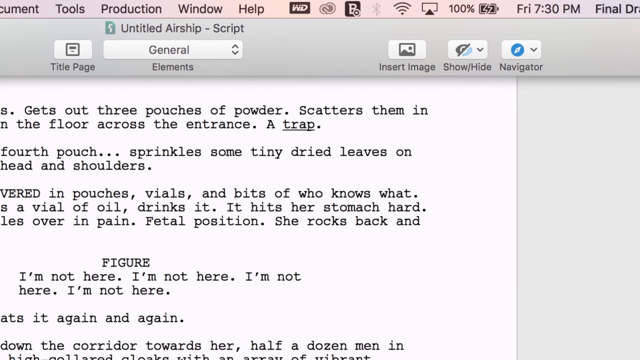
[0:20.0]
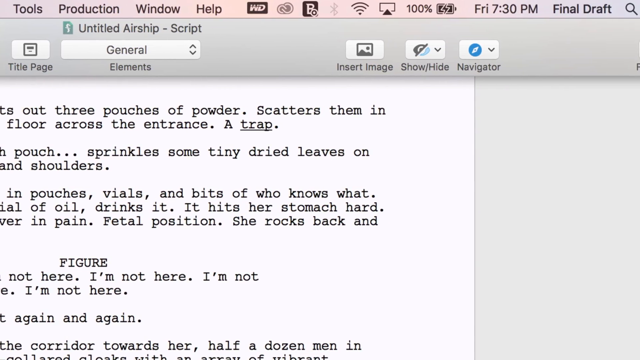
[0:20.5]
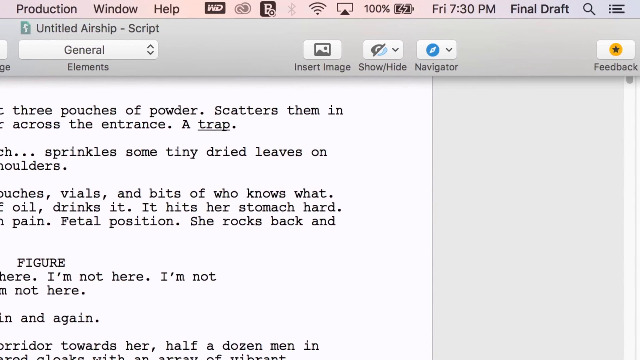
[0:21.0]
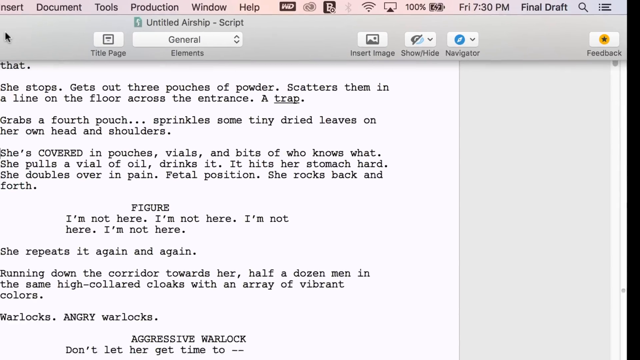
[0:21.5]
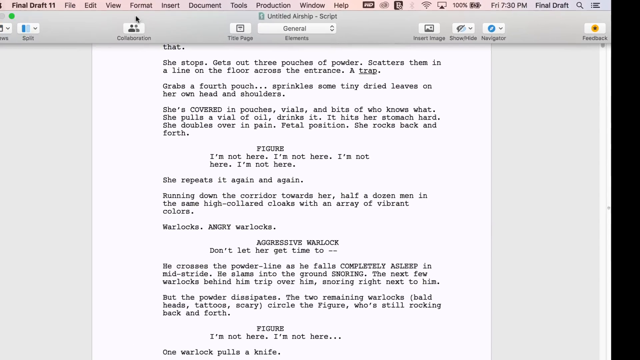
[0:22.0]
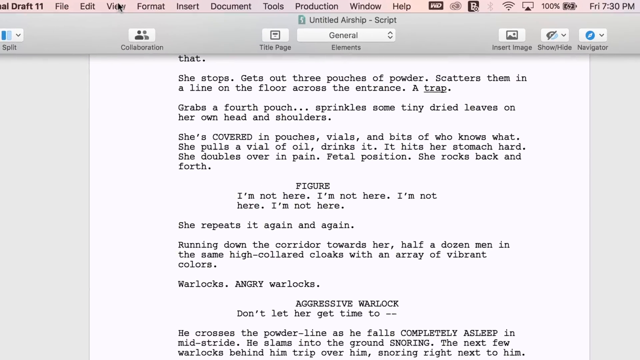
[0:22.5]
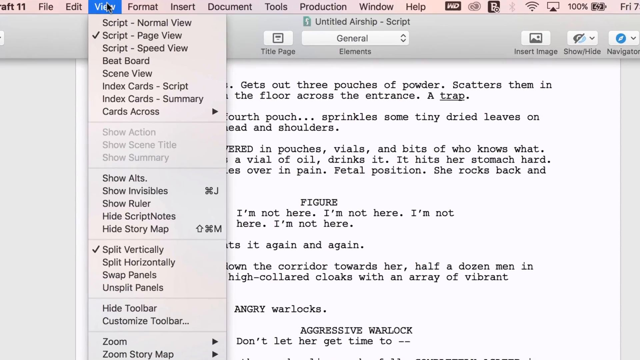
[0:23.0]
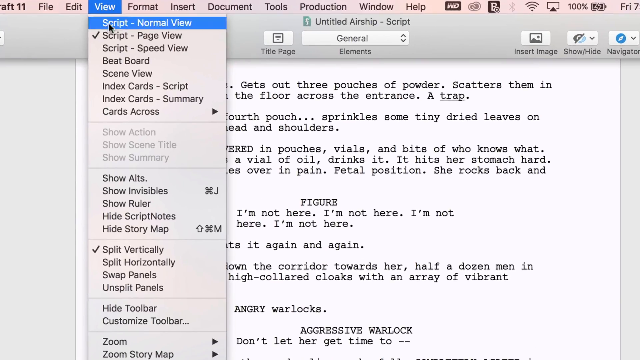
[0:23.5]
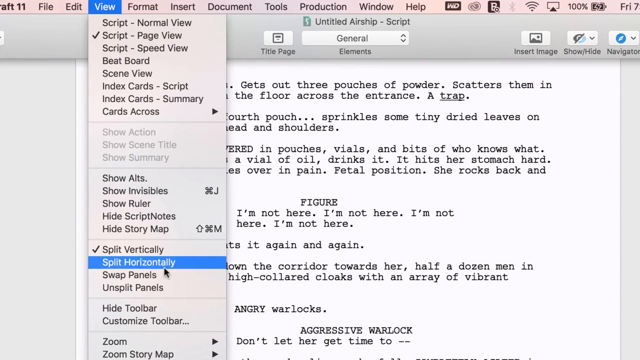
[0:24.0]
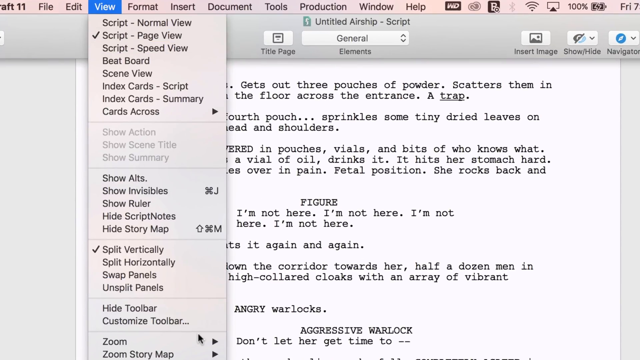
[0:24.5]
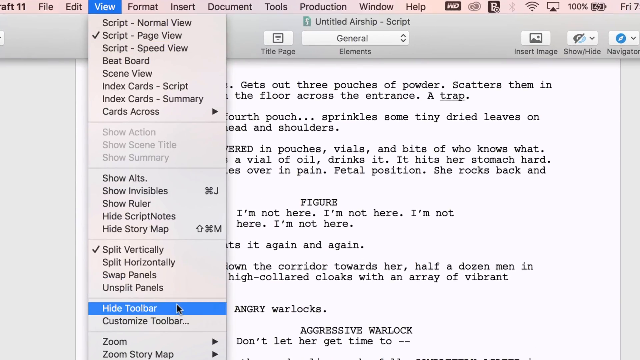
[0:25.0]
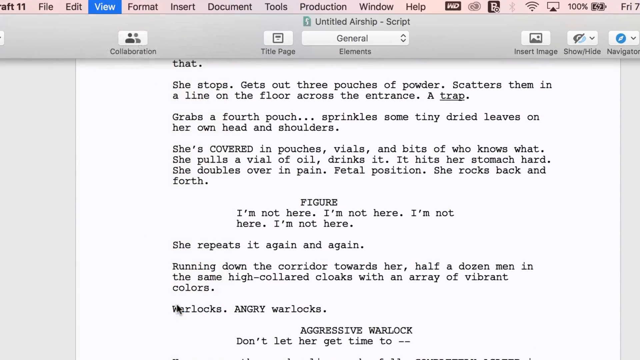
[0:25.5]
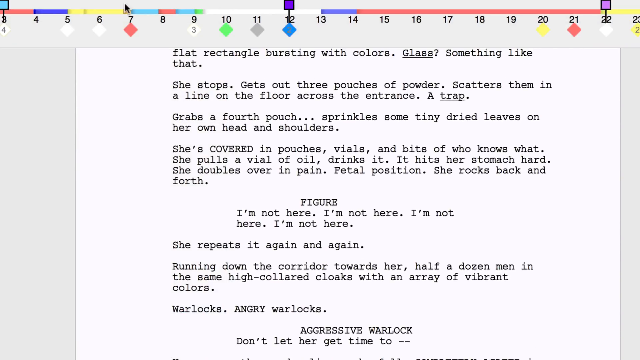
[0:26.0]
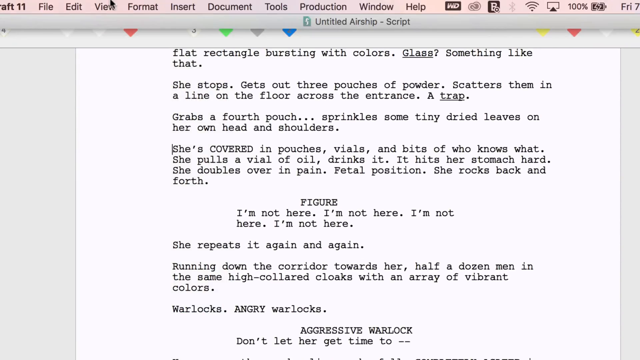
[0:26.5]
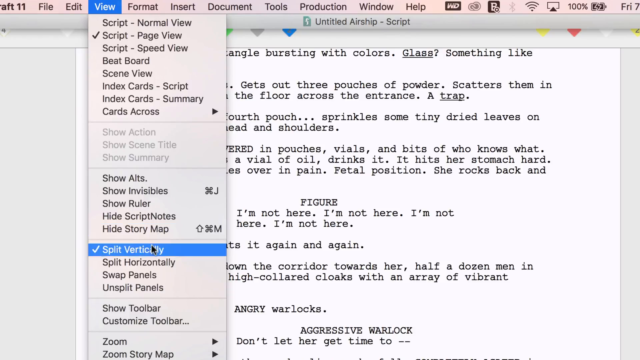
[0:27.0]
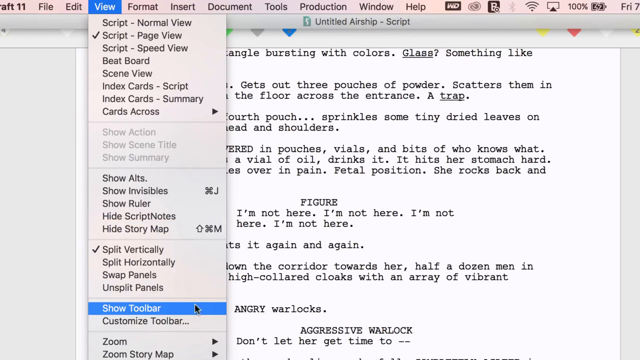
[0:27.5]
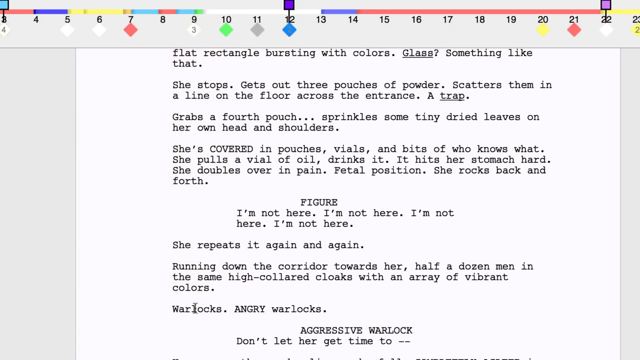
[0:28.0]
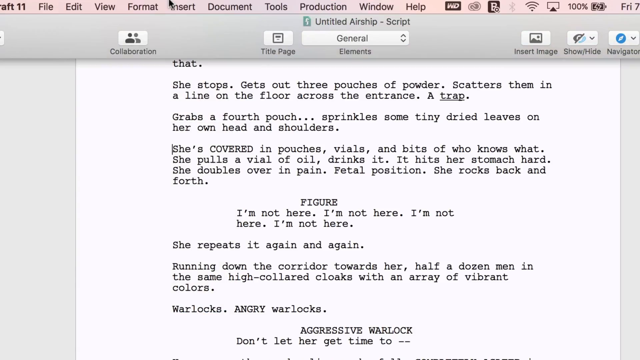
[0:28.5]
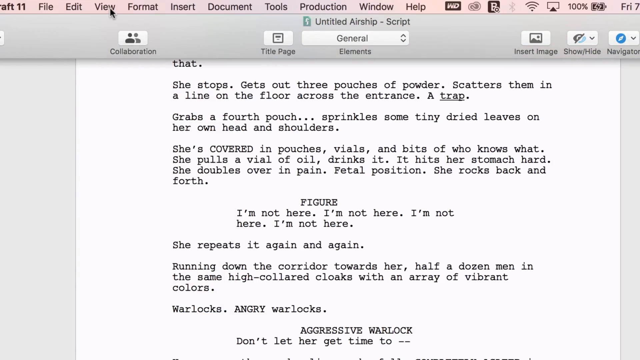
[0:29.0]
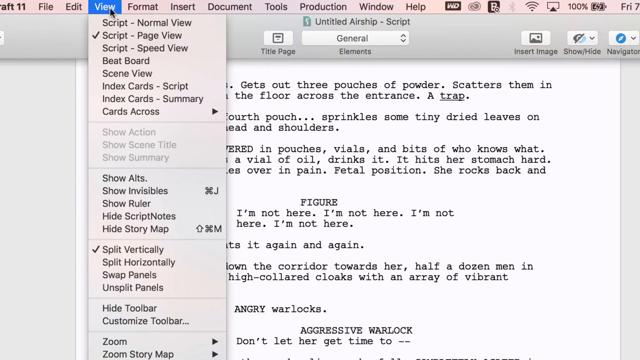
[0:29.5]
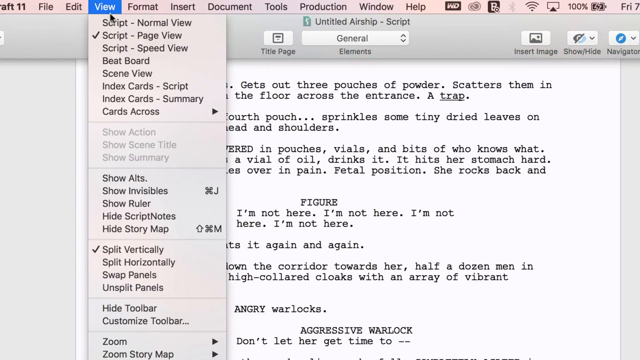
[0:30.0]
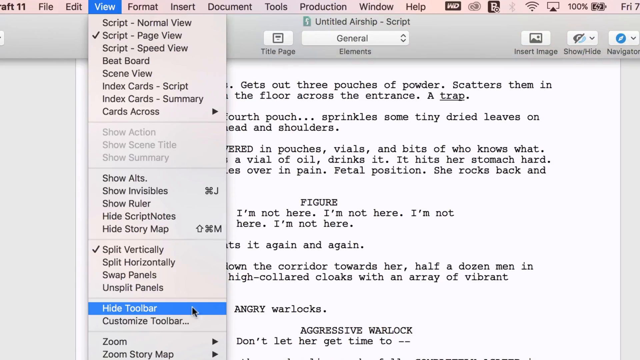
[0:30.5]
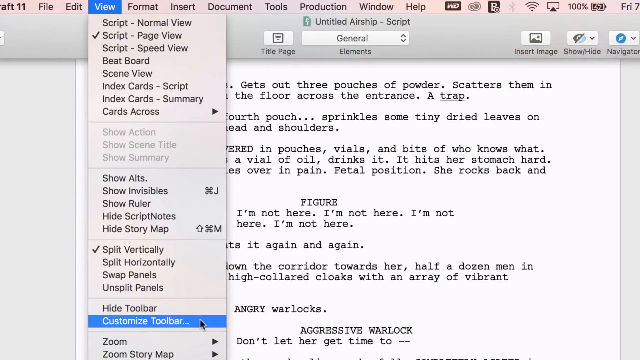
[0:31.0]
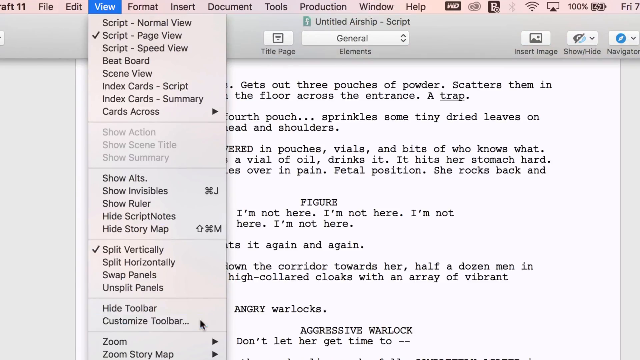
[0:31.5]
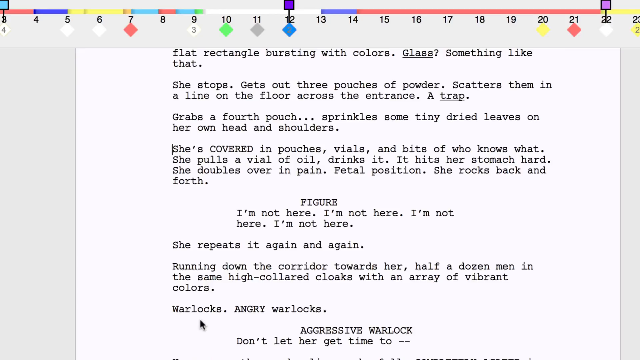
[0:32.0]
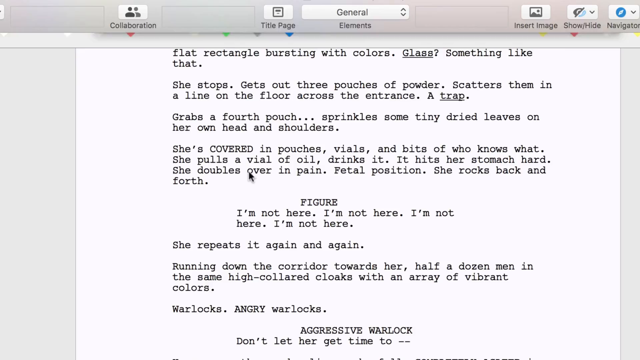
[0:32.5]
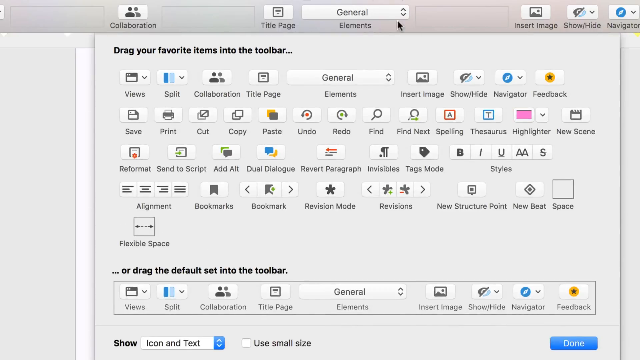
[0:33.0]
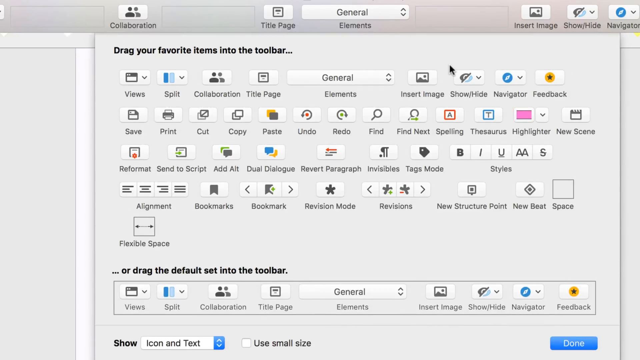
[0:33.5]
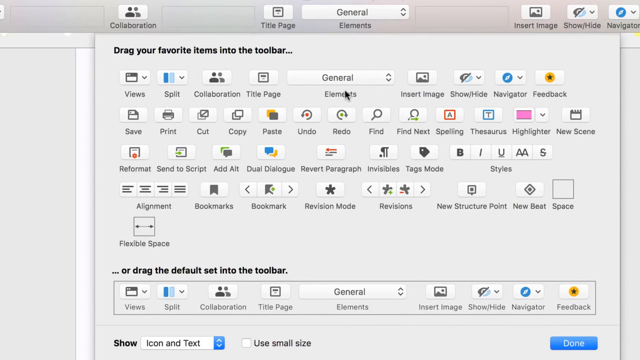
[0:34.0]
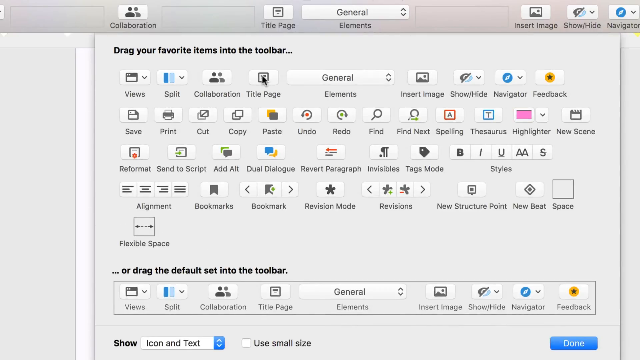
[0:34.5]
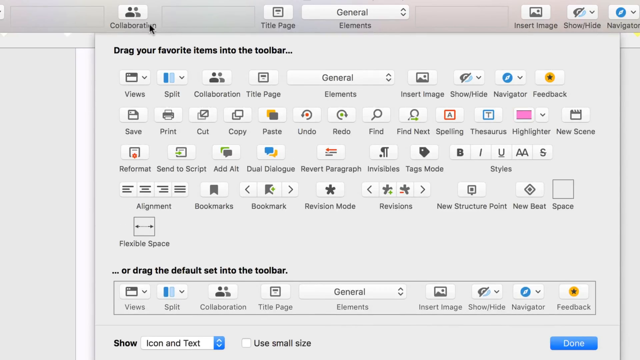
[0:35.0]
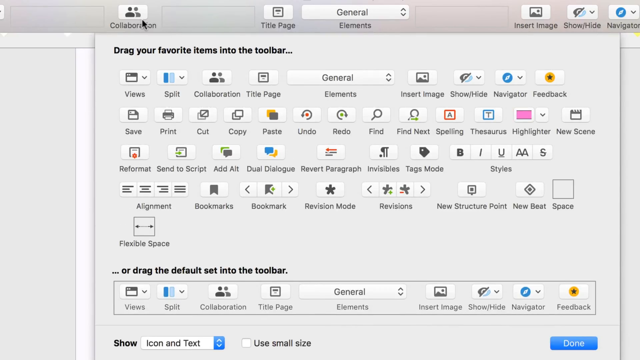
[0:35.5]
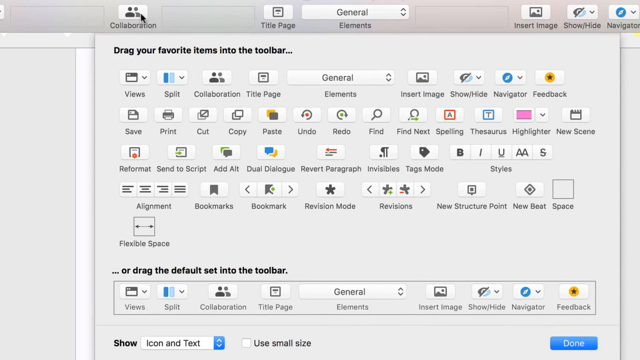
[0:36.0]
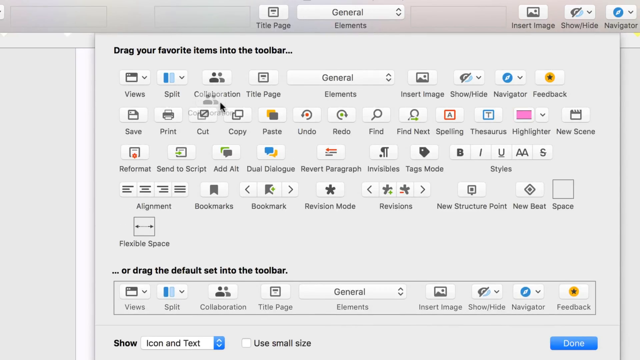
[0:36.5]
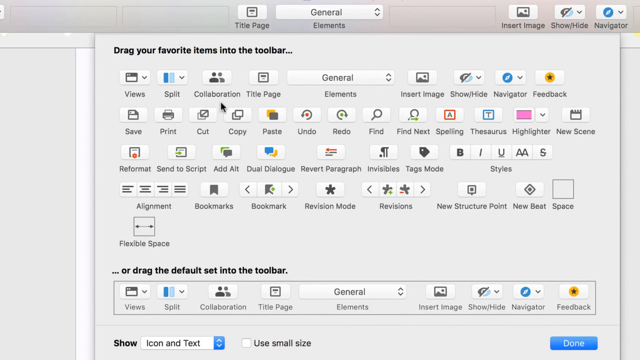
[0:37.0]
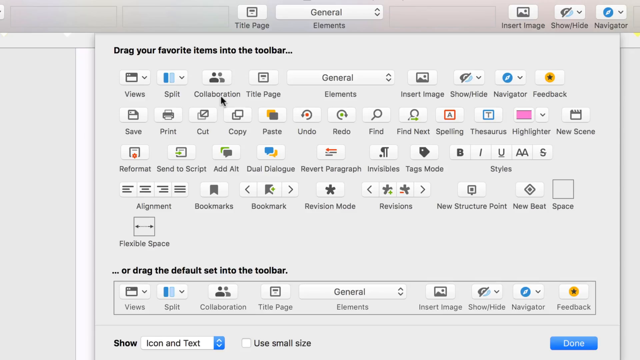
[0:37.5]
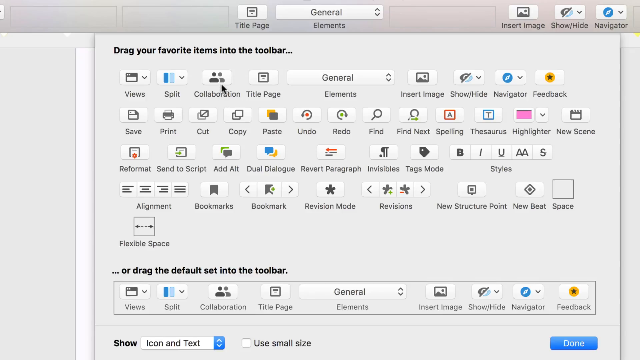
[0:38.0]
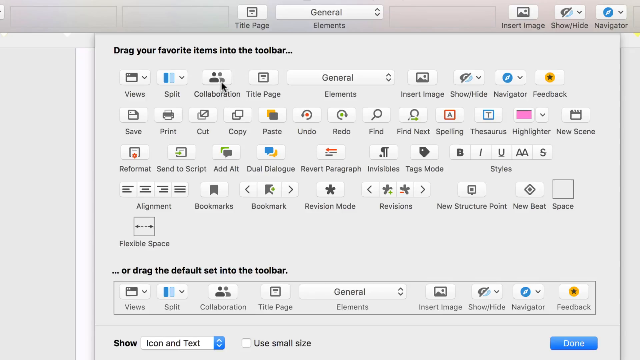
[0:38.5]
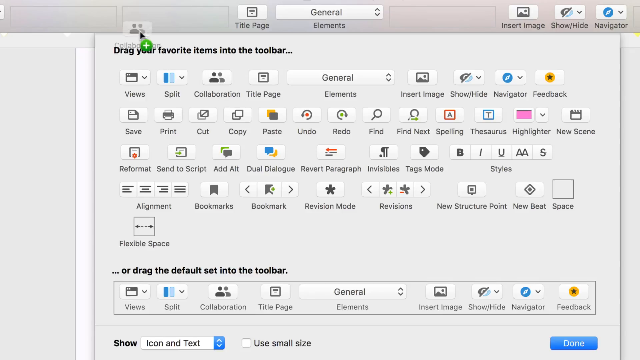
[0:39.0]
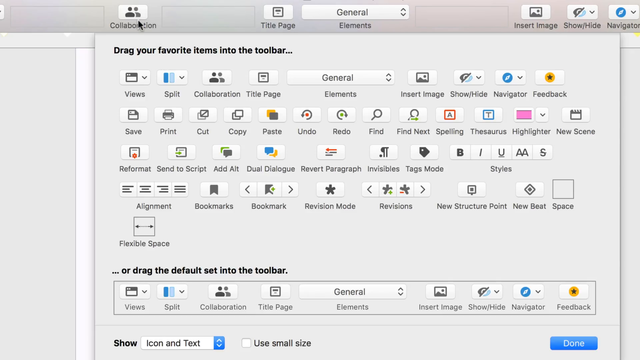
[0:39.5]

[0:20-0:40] Inside the Final Draft application, the title of the script, Untitled Airship, is visible at the top. Underneath it is a button that says "General," along with a whole bunch of other icons. The camera zooms to the right and then pans out, revealing a document in the center of the screen with a lot of text, a script for some kind of play, movie or story. The camera zooms in a little, and the mouse cursor goes up to the menu at the top and clicks on View, opening a list of options. The cursor scrolls down, highlighting the options in blue as it passes, then goes back up to "Hide Toolbar" and clicks it, and everything disappears. It goes to View again and chooses a different option, "Show Toolbar," and the toolbar is shown. It goes to View once more and clicks "Customize Toolbar," bringing up a whole bunch of options for customizing the toolbar. The cursor moves all around that section, grabs an item that says "Collaboration," and pulls it to the top of the screen.